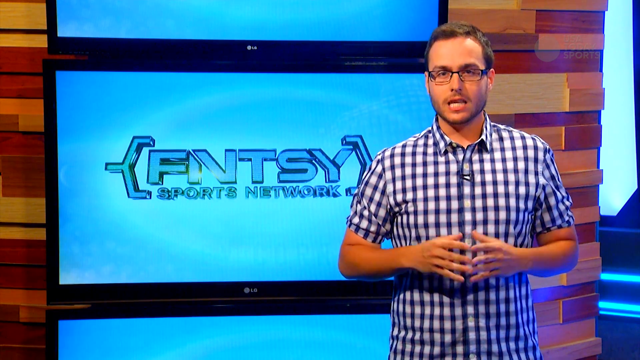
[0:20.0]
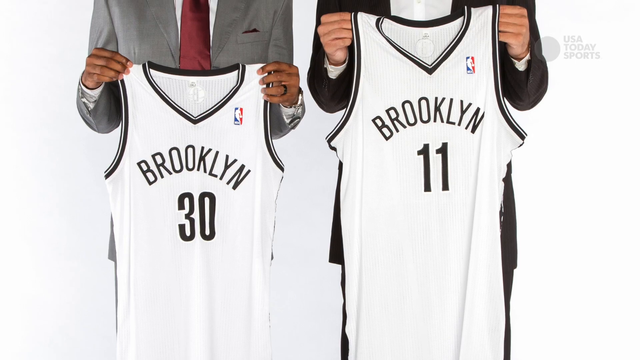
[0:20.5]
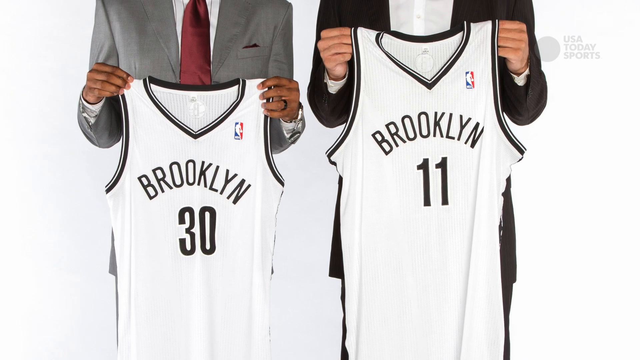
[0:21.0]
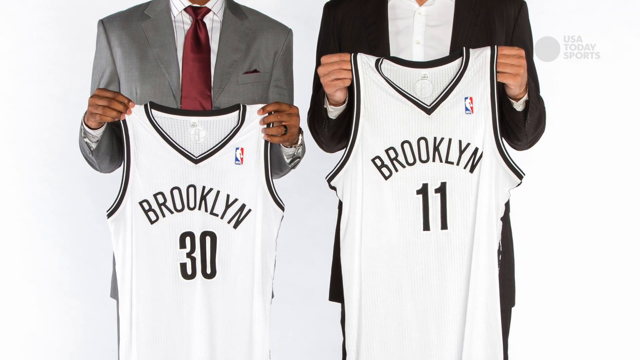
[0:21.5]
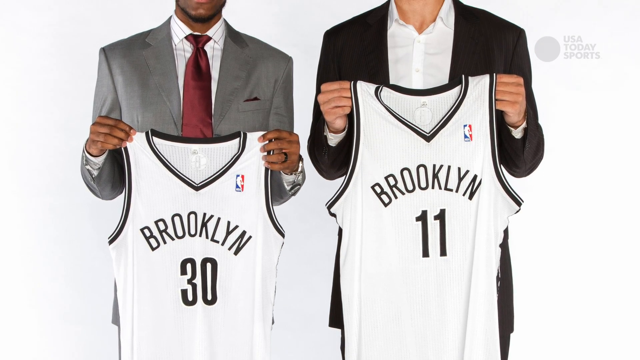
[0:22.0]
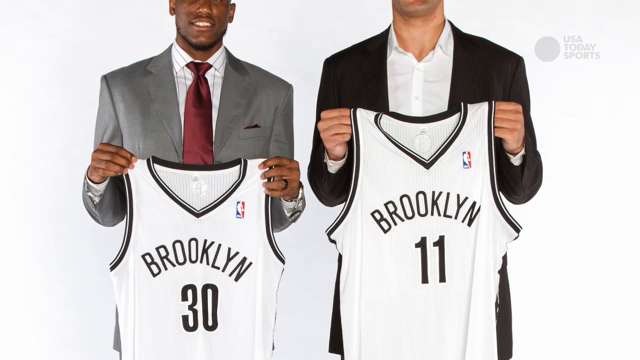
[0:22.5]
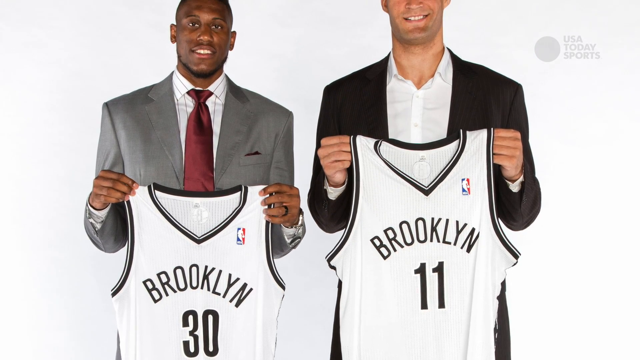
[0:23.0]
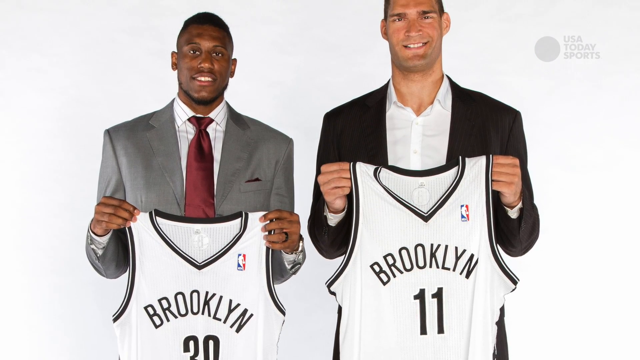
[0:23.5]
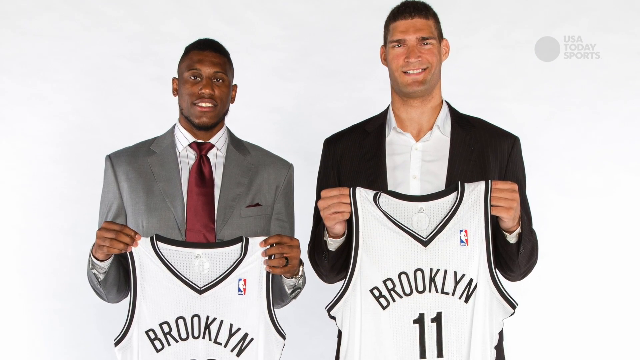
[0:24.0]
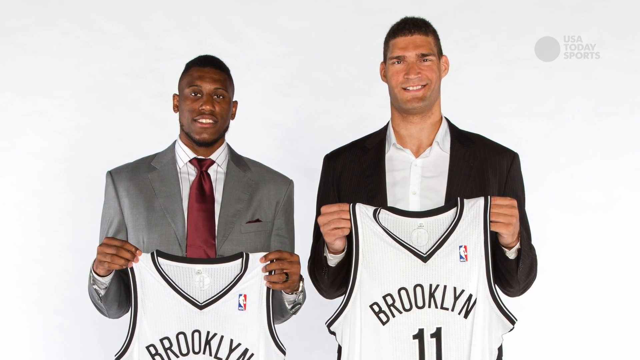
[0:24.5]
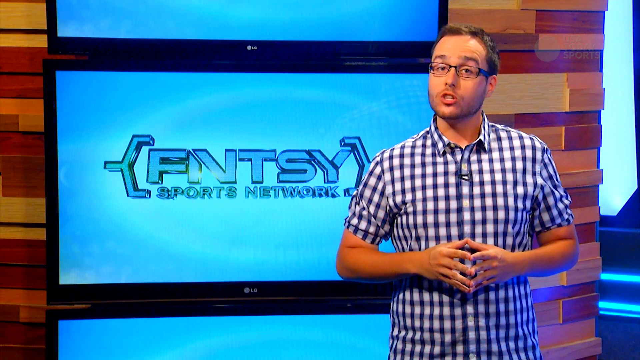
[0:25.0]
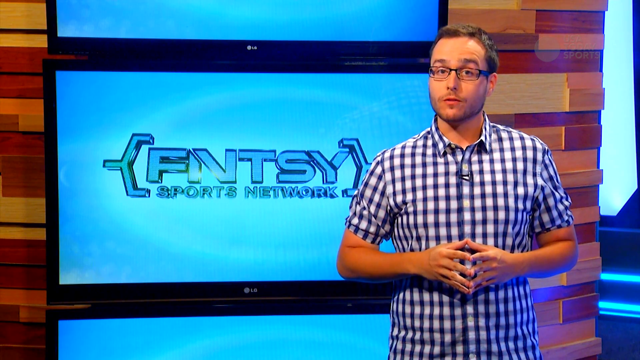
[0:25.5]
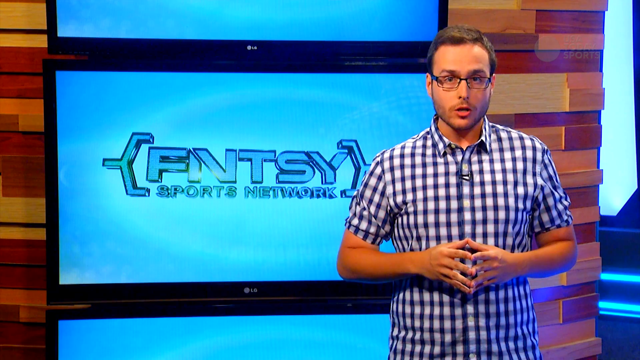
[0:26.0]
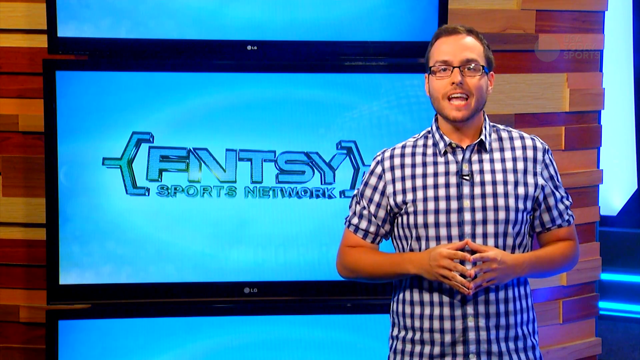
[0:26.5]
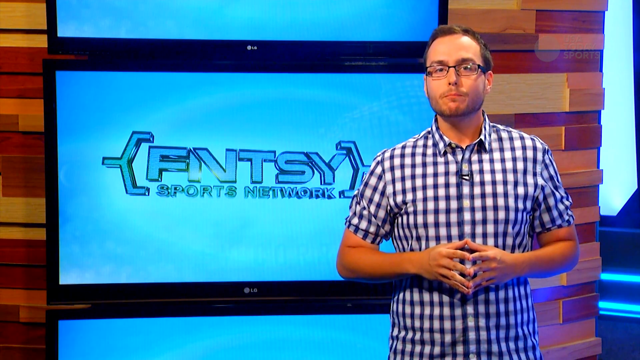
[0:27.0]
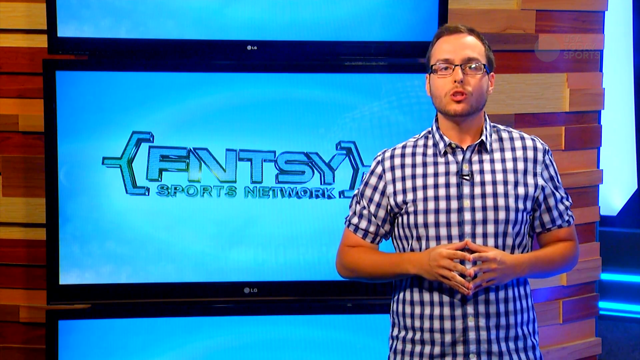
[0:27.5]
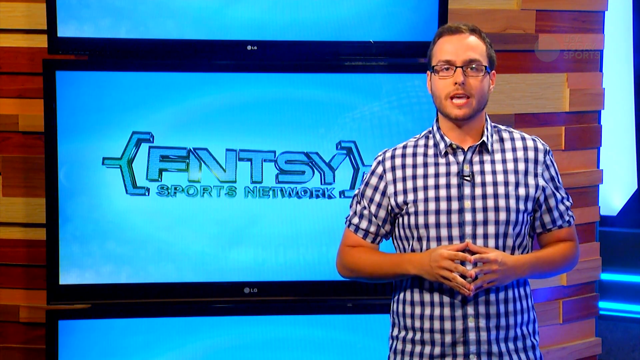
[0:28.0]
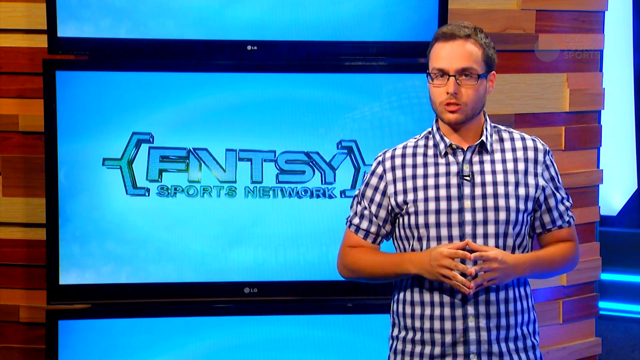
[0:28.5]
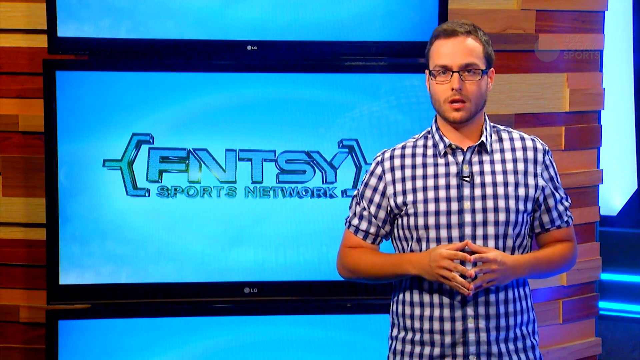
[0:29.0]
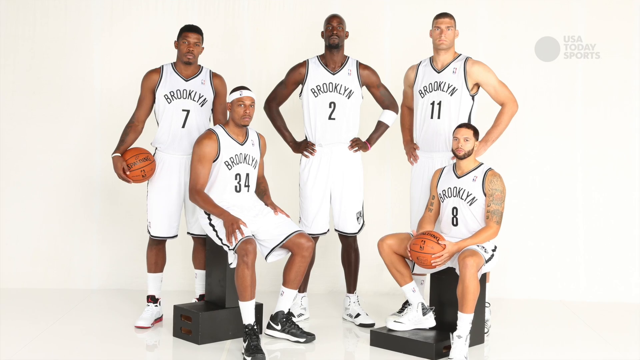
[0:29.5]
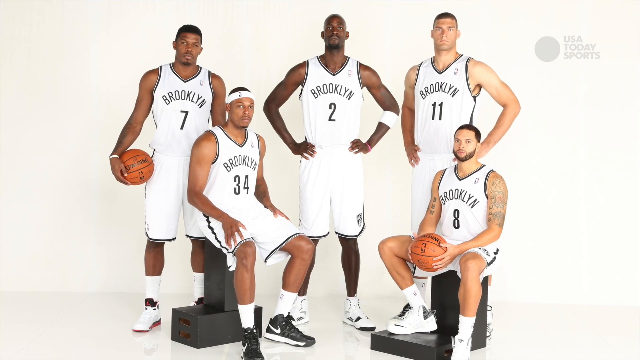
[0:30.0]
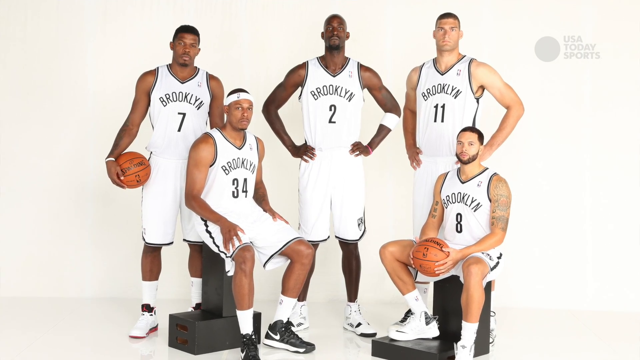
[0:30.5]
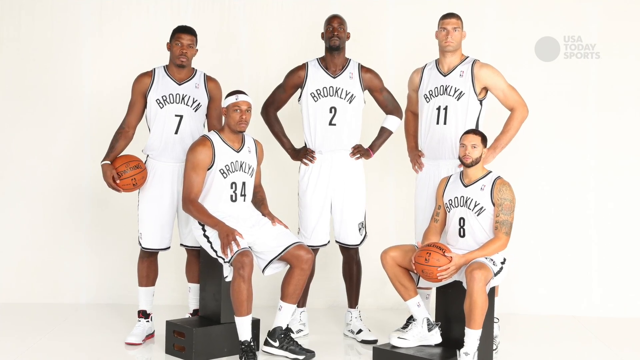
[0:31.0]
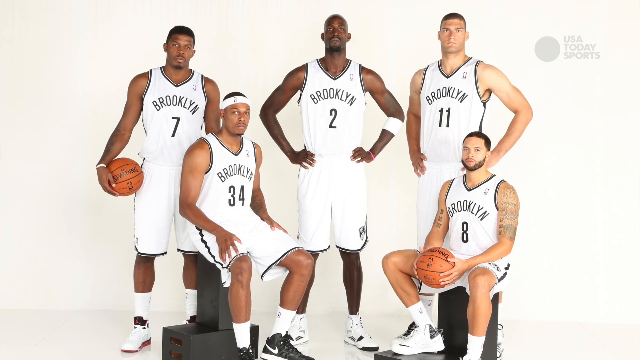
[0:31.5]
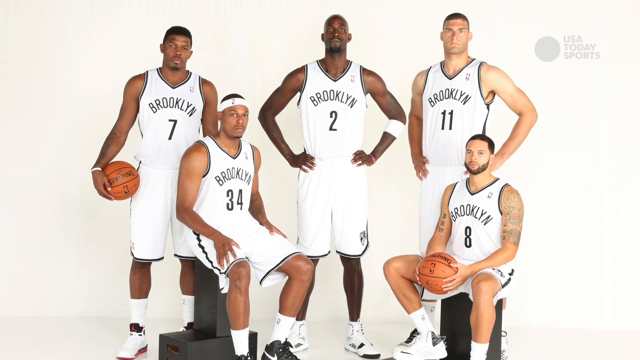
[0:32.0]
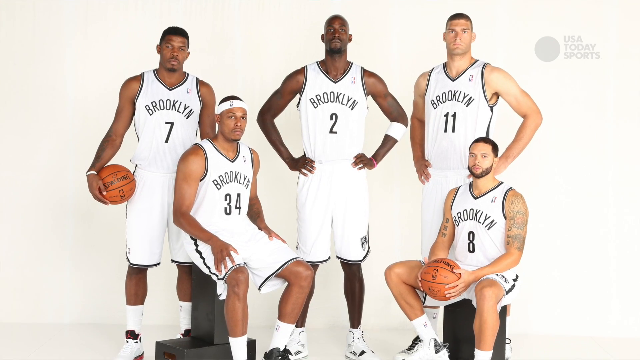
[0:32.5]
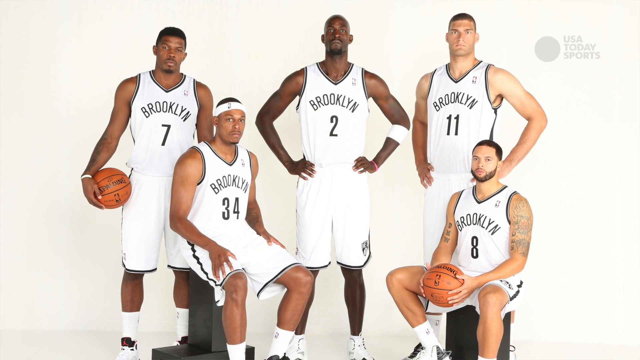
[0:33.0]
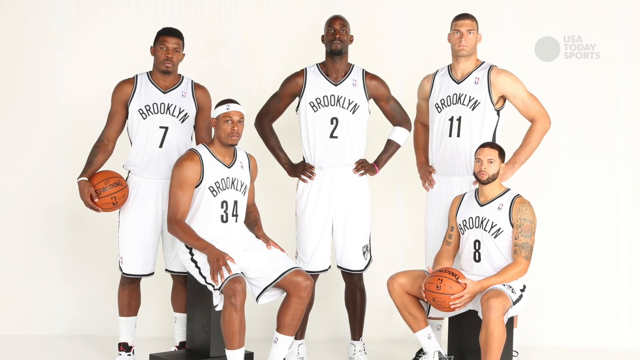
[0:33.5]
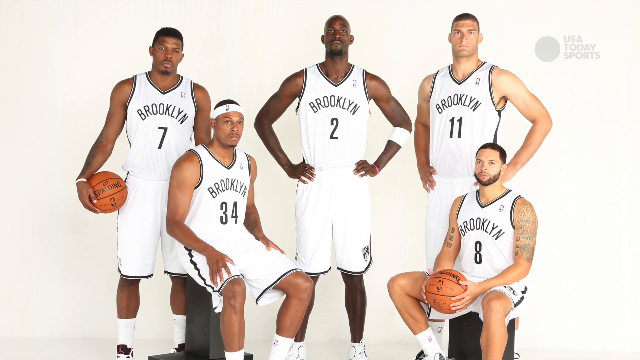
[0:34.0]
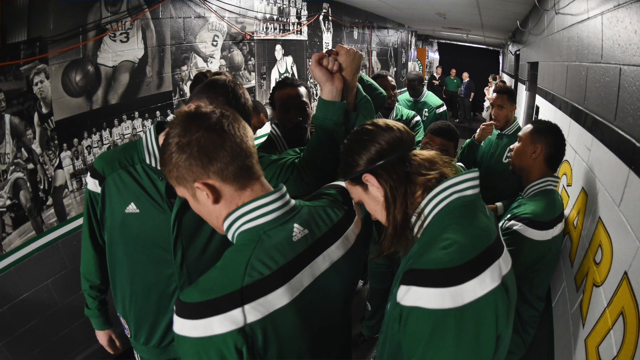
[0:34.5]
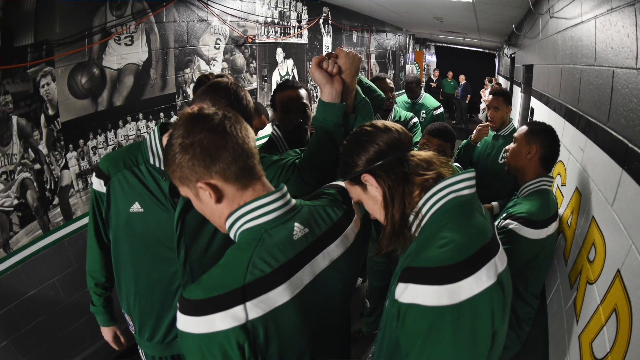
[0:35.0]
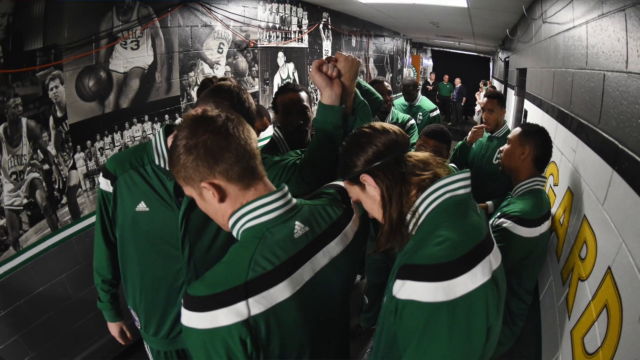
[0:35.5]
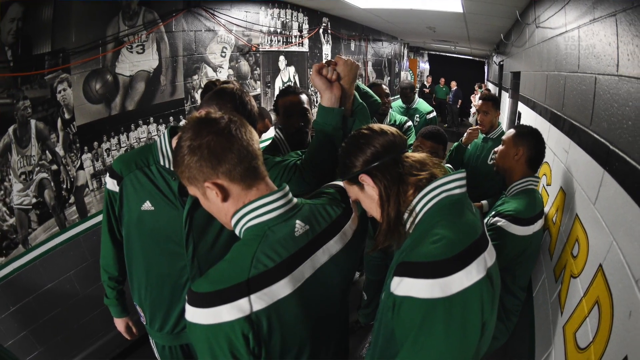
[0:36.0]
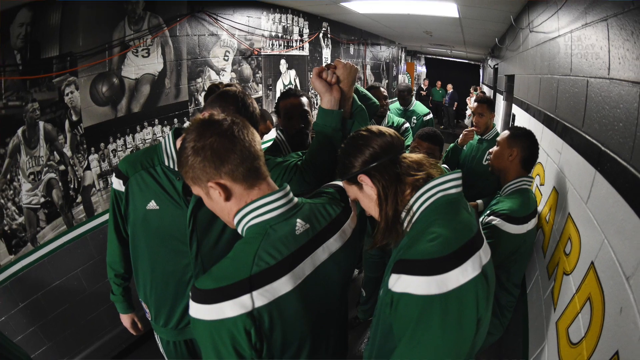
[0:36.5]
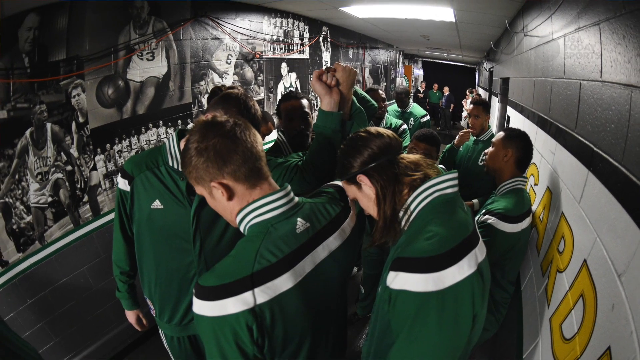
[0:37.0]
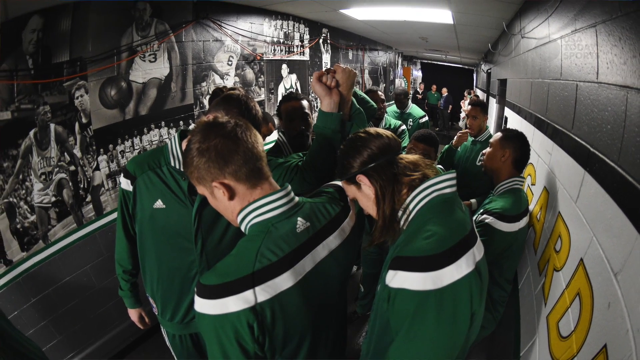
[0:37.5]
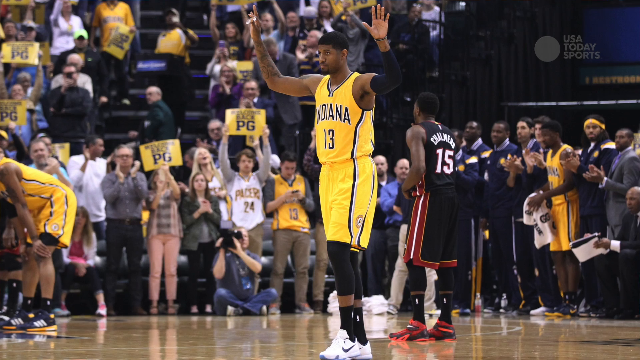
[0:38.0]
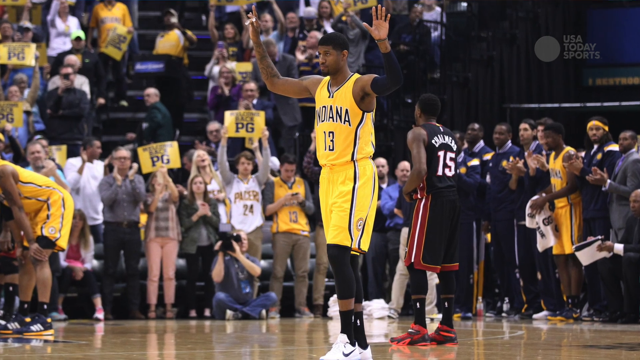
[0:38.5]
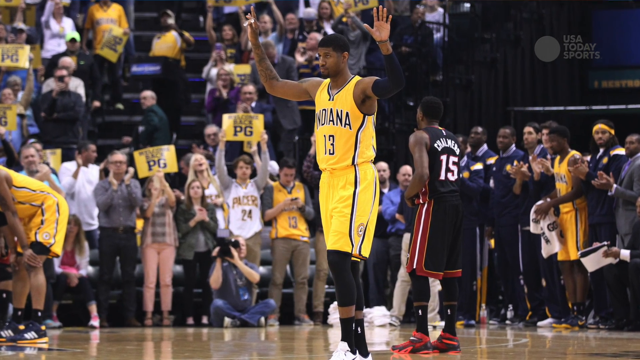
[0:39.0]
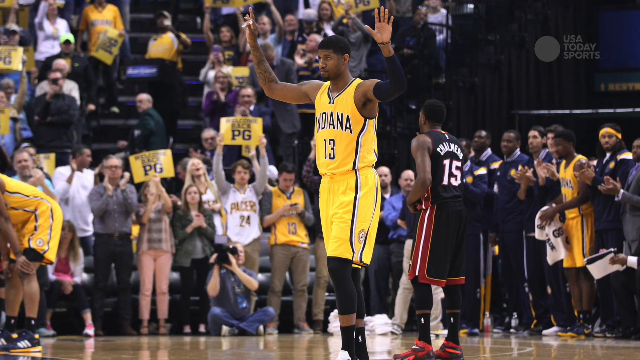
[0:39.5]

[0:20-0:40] The reporter is in the studio. Two men dressed in suits appear. The one on the left is black and wears a tie and jacket; he holds up a Brooklyn jersey. Next to him is a much taller white man in a black sport coat and a white button-down shirt with no tie, who also appears to be holding up the jersey that says "Brooklyn." They look as though they are going to be on the same team, and both smile for the camera. The video returns to the reporter. Five men, apparently of the Brooklyn team, pose in their jerseys. Then the team appears in green warm-up outfits. After that, a basketball team in yellow jerseys is shown, with "Indiana" on their uniforms; their relationship to the other players is unclear.